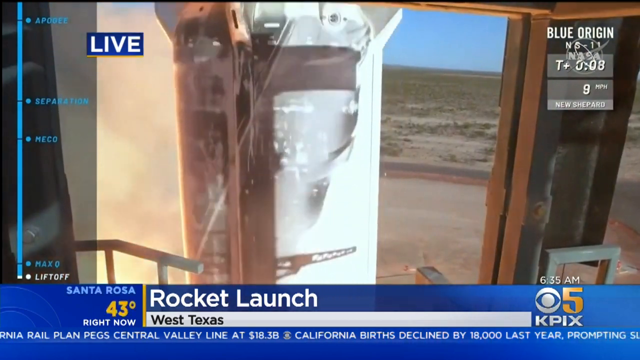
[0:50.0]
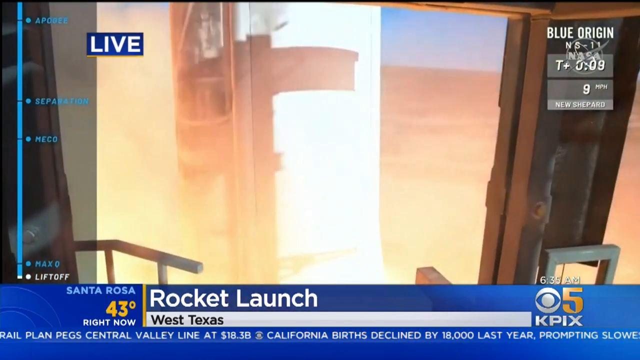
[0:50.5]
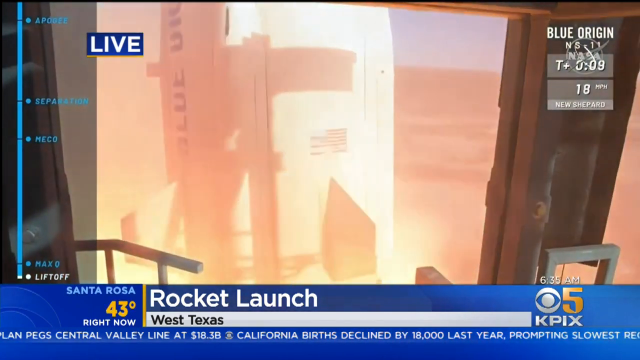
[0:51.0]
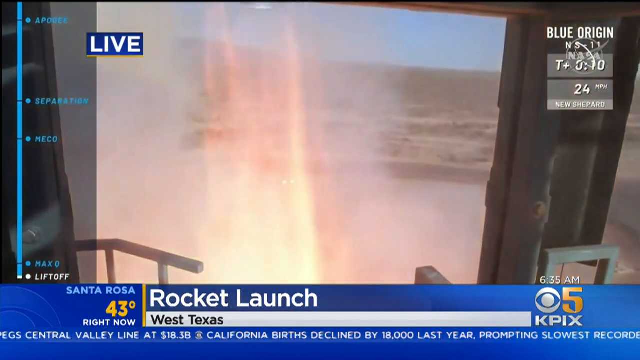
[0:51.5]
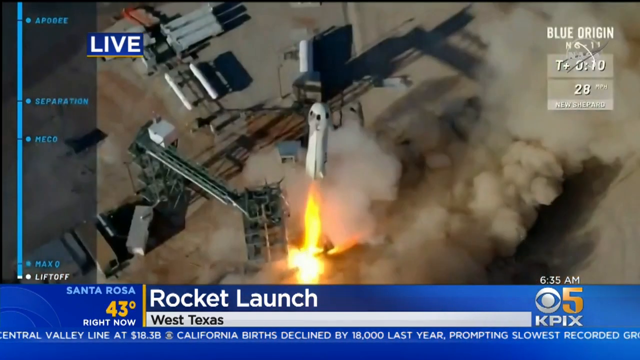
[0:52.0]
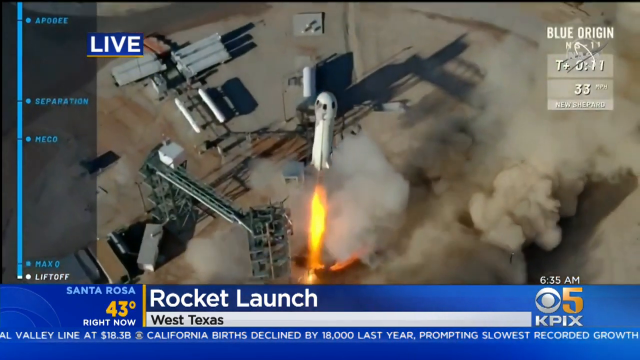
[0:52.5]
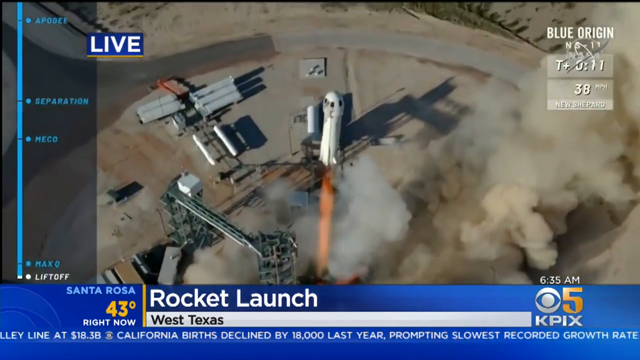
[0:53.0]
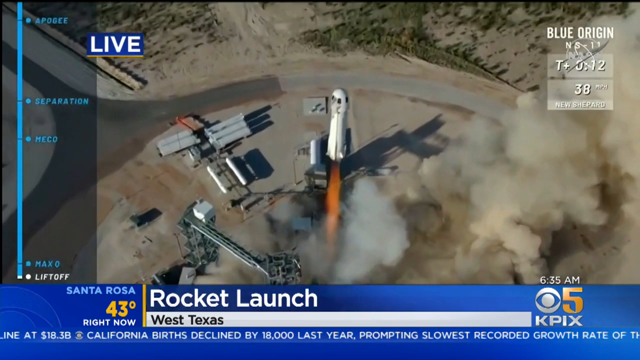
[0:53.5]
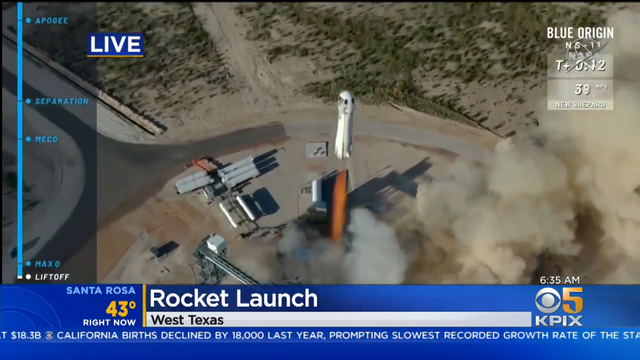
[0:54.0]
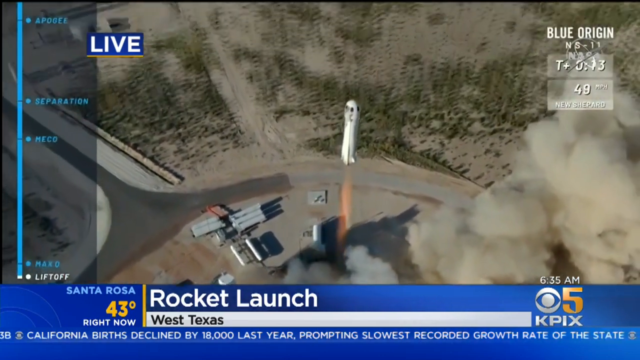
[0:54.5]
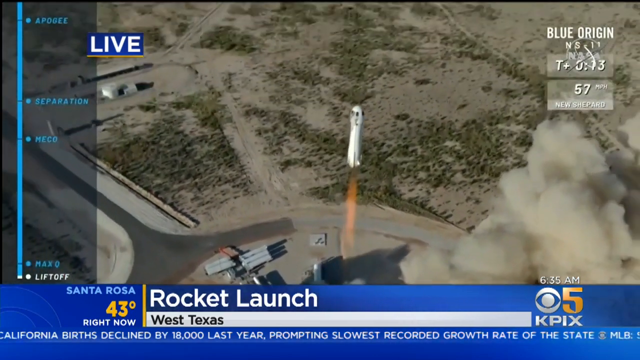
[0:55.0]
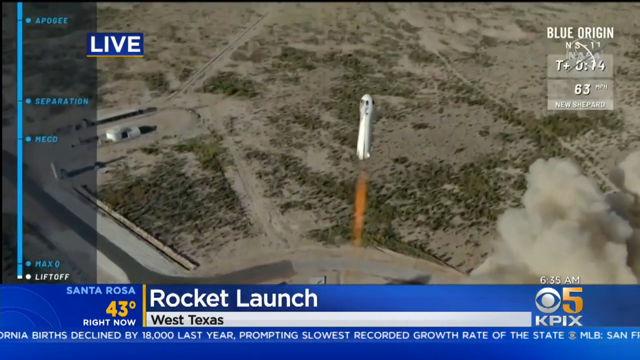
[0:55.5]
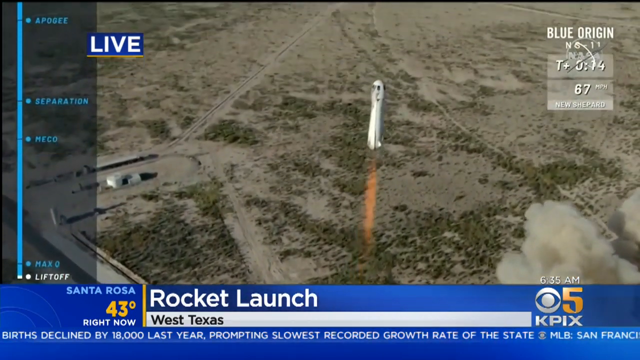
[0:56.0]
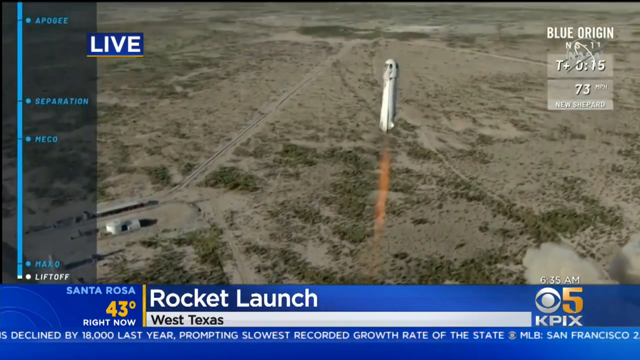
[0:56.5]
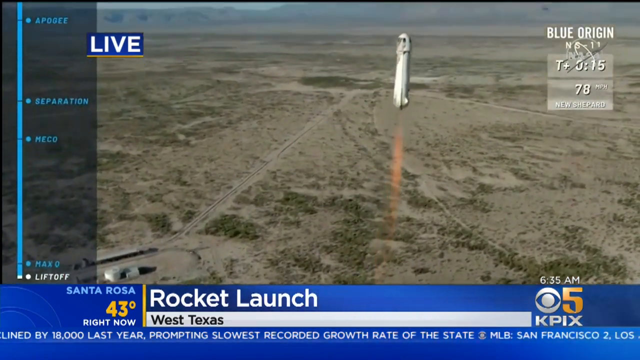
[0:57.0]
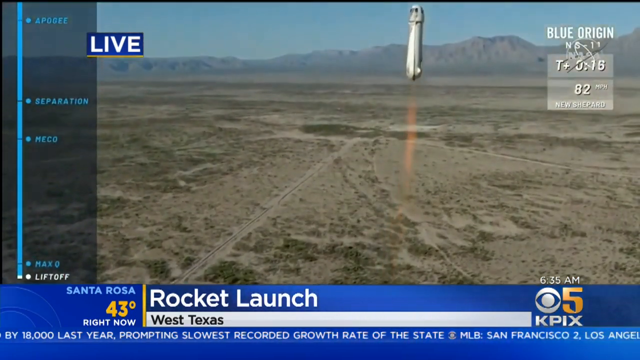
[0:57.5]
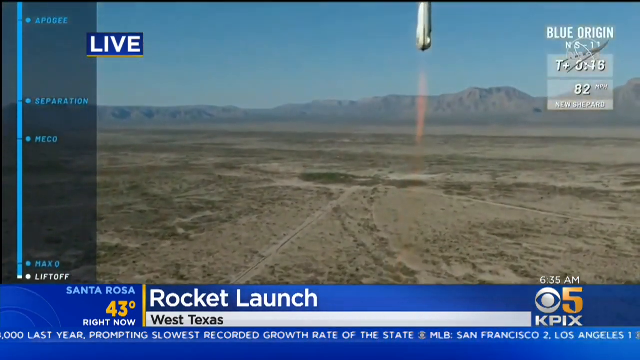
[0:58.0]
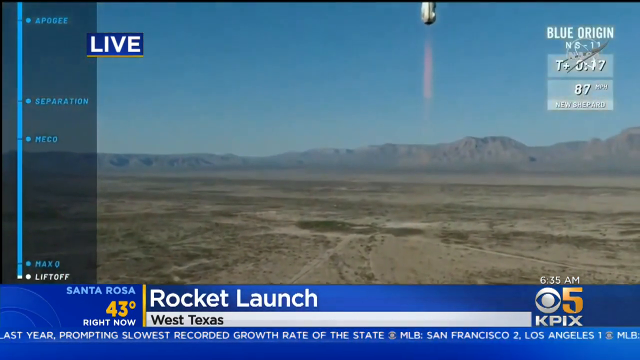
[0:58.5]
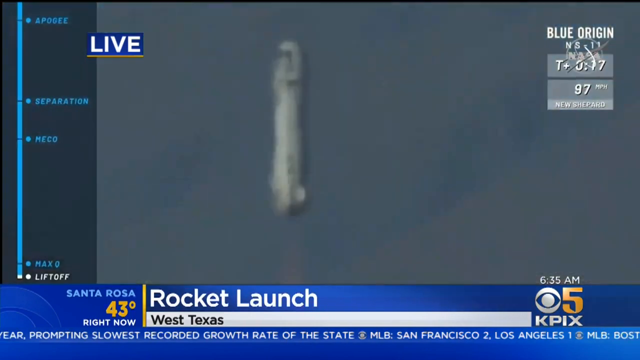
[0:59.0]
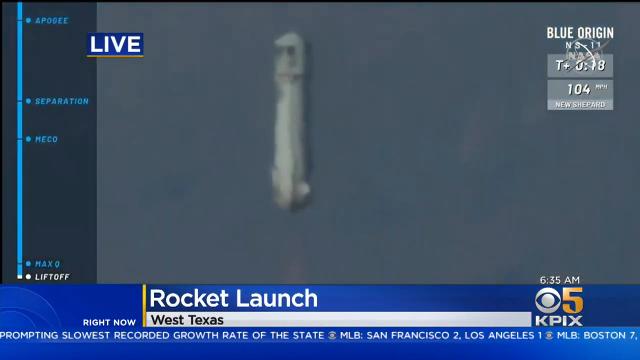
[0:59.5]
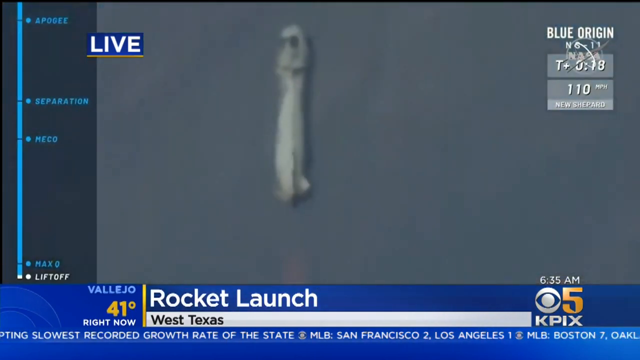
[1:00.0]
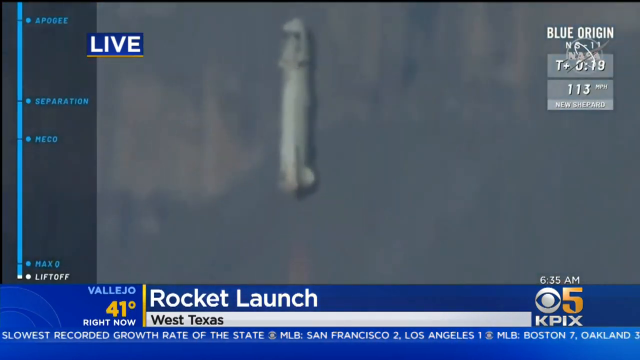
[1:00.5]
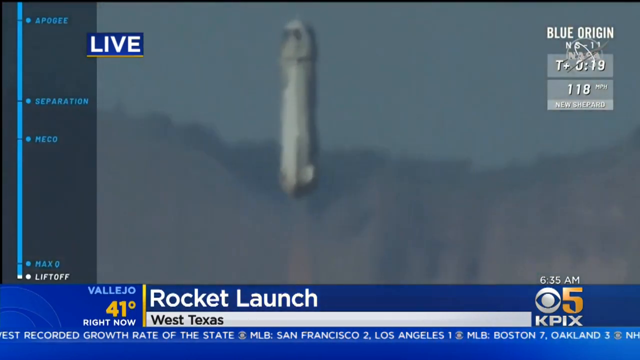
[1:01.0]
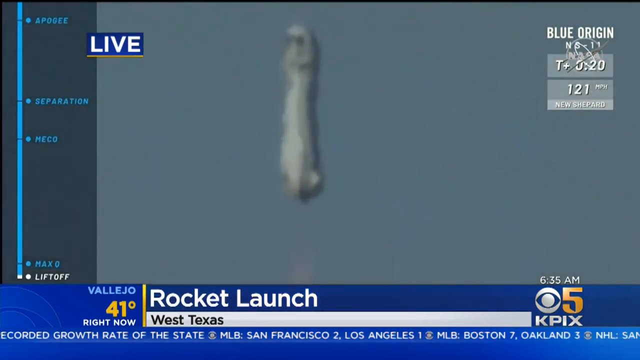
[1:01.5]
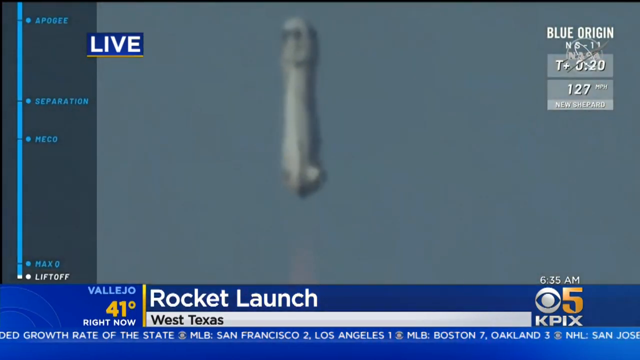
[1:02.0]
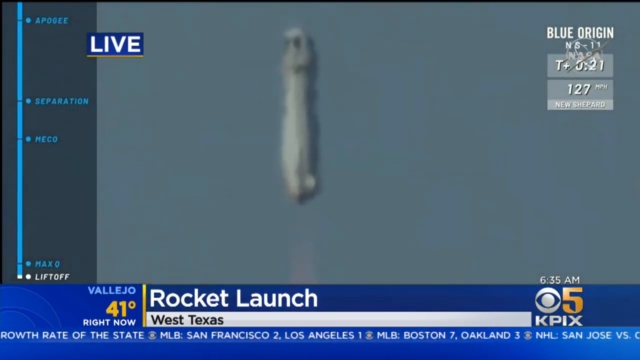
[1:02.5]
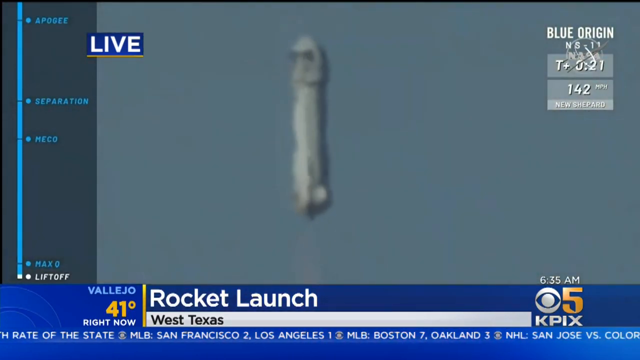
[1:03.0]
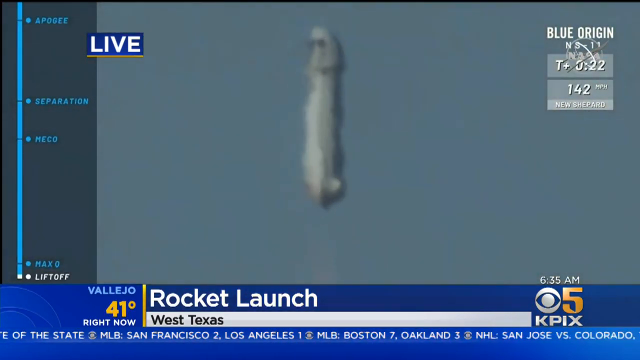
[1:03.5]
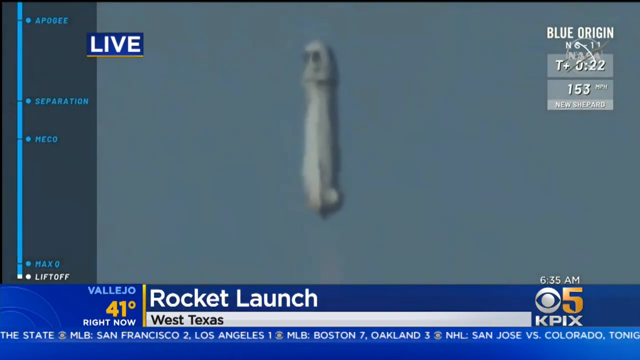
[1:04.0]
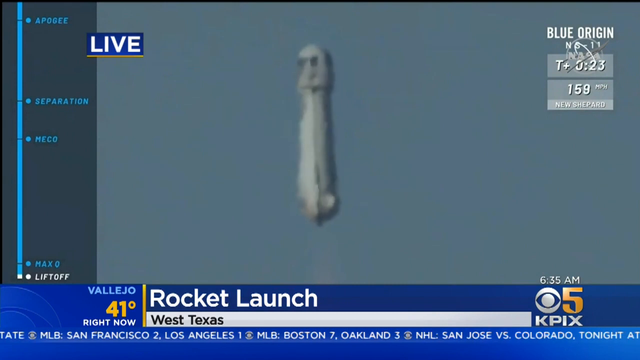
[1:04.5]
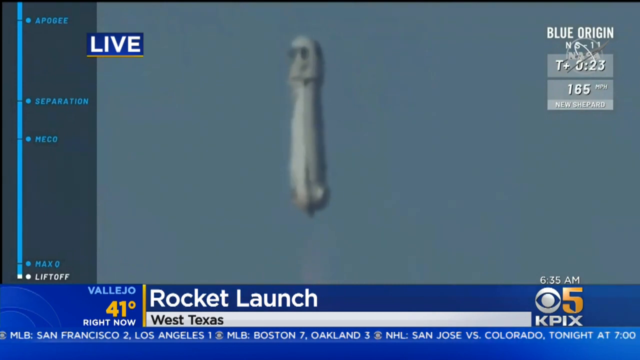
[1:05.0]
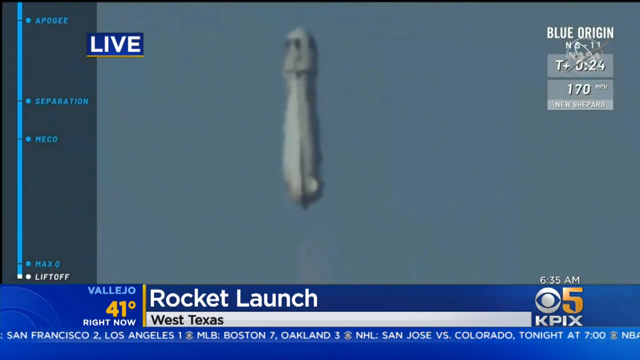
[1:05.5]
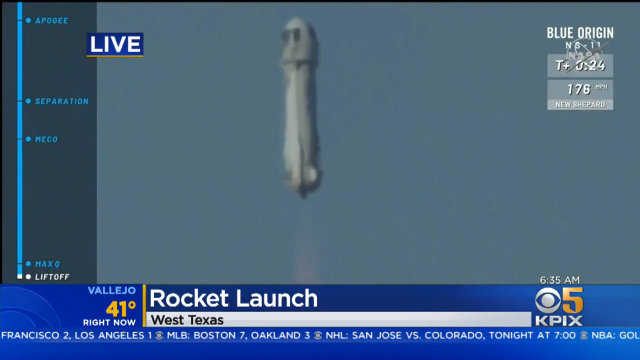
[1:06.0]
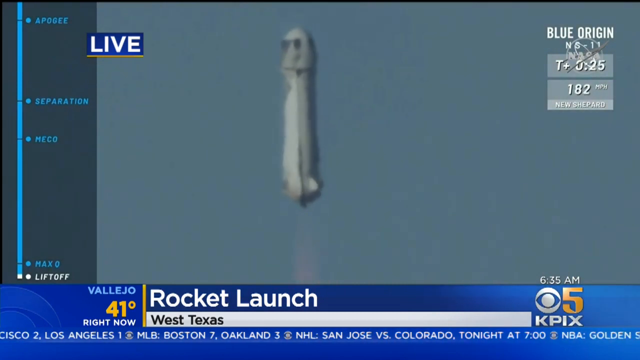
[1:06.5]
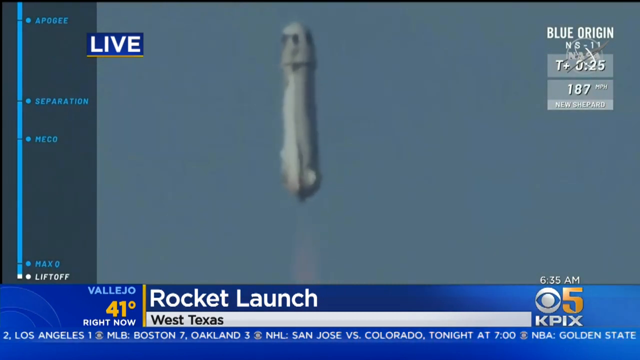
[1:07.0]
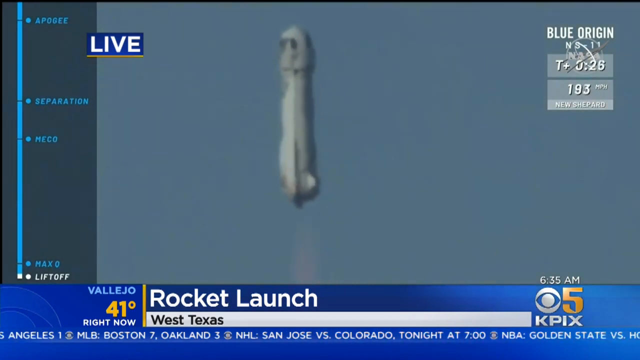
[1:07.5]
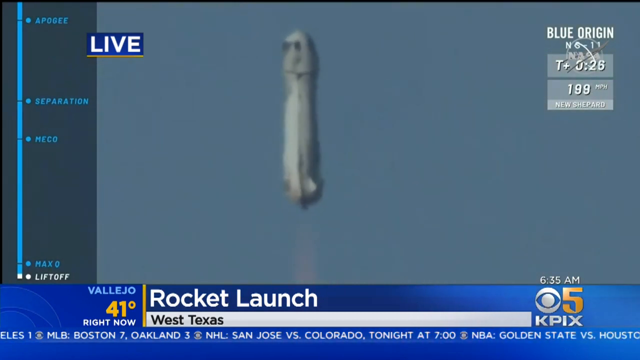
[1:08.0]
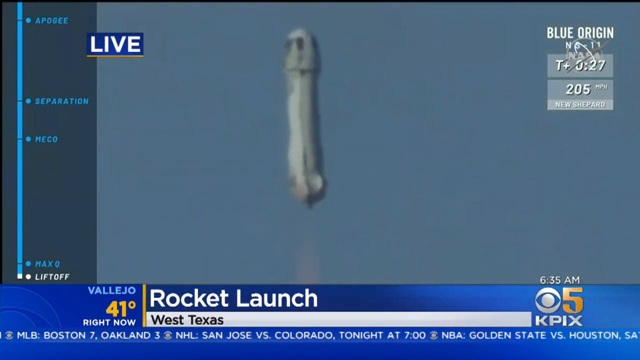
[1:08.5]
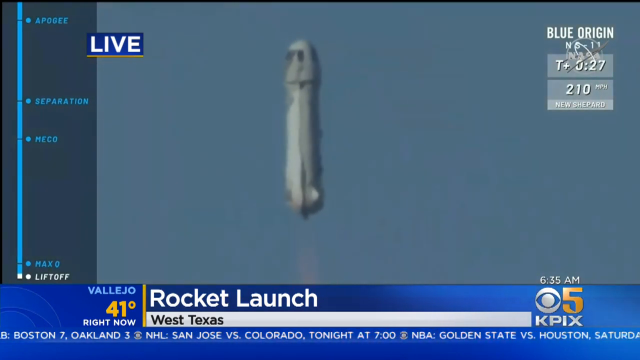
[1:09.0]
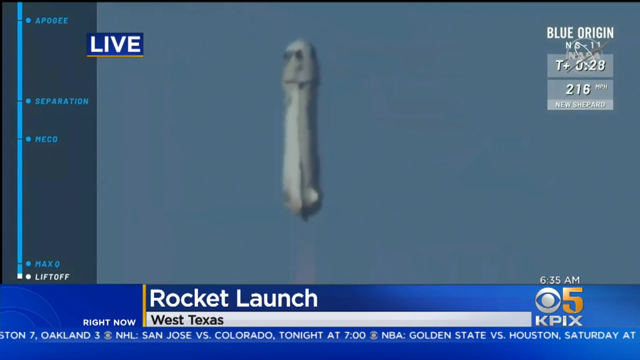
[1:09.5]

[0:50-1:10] The rocket ship takes off, shown from the top: its body moves into the air, then its end comes into view with flames shooting from the bottom. The view then switches to a recording apparently made by somebody in an airplane, filming the rocket ship as it launches. A long trail of fire is below it, along with a lot of smoke. The rocket rises incredibly high, going up and up until the flames are barely visible, and it kind of fades because of the clouds in the sky. It reaches just above a mountain and keeps going higher and higher.